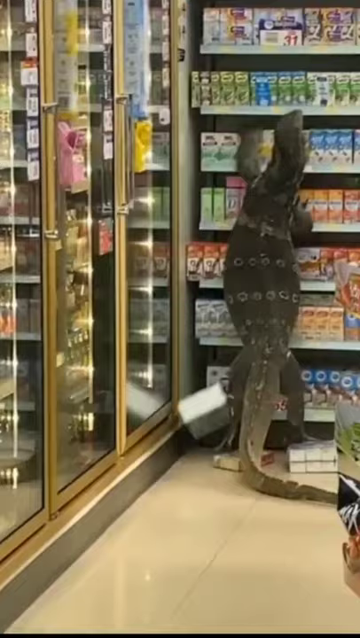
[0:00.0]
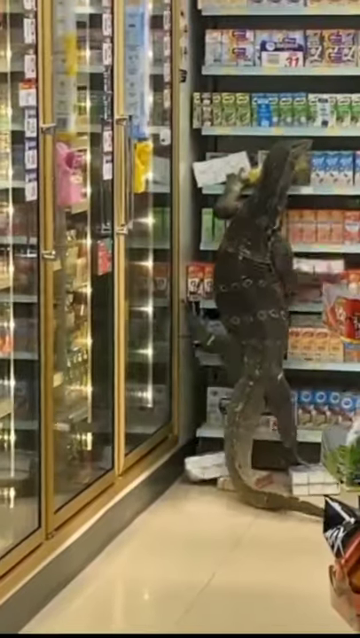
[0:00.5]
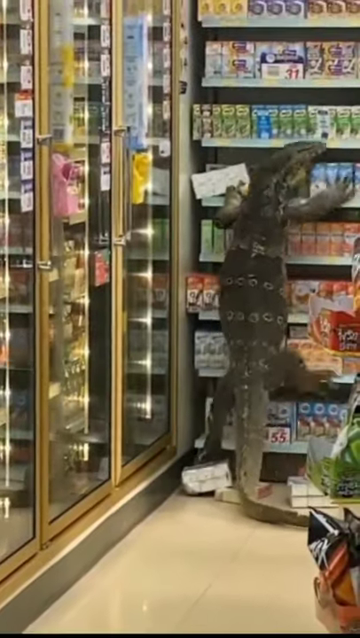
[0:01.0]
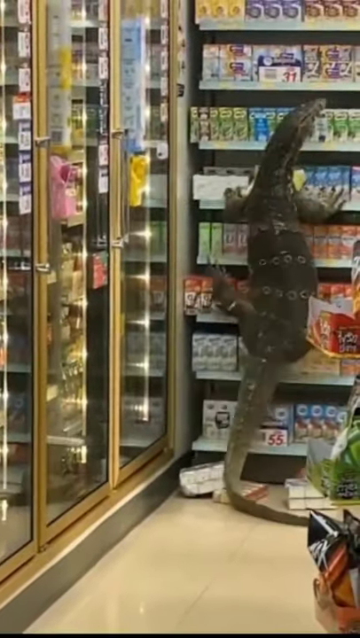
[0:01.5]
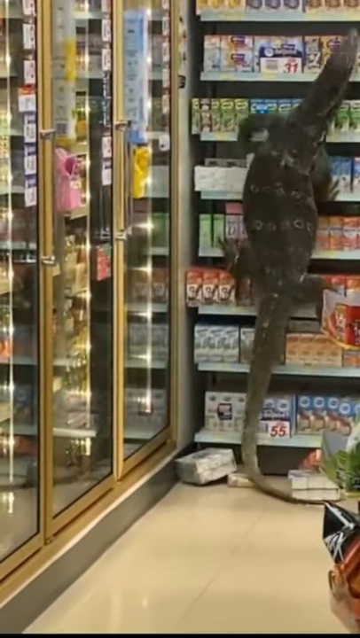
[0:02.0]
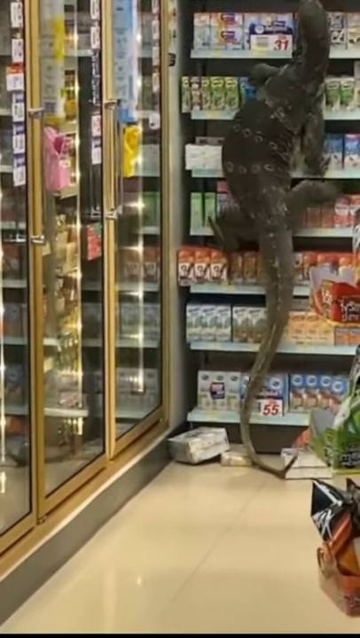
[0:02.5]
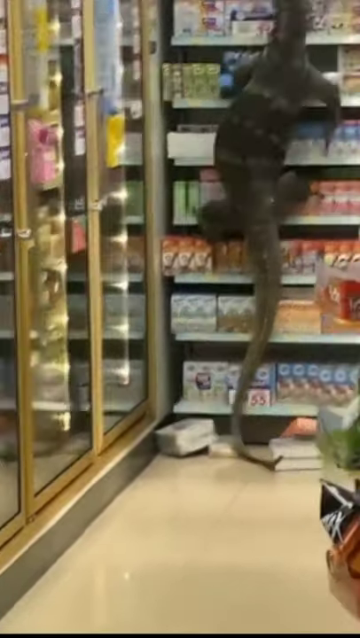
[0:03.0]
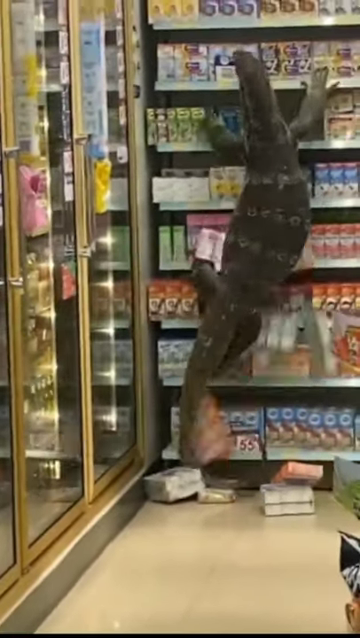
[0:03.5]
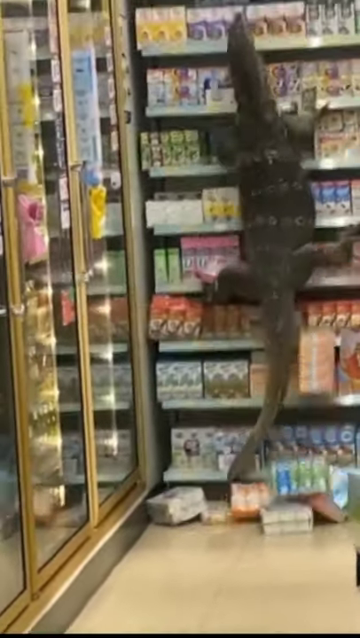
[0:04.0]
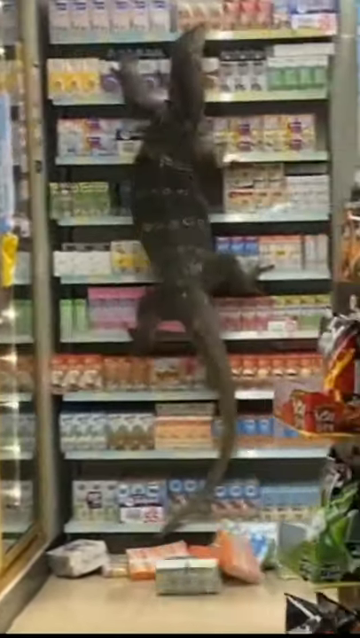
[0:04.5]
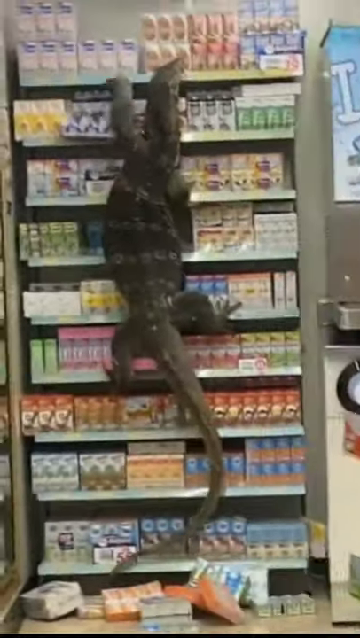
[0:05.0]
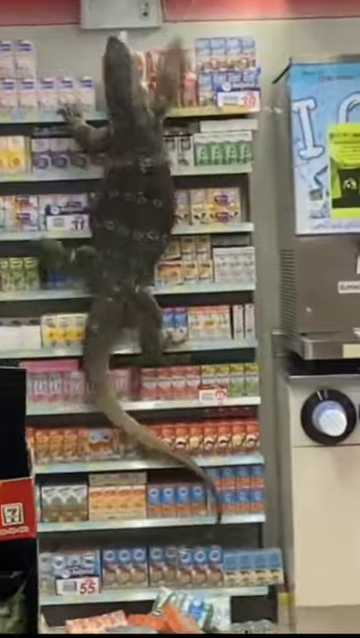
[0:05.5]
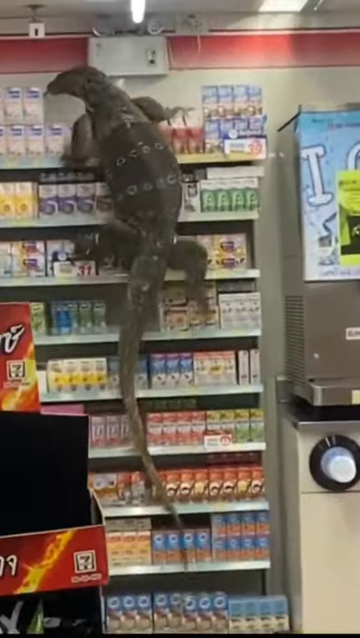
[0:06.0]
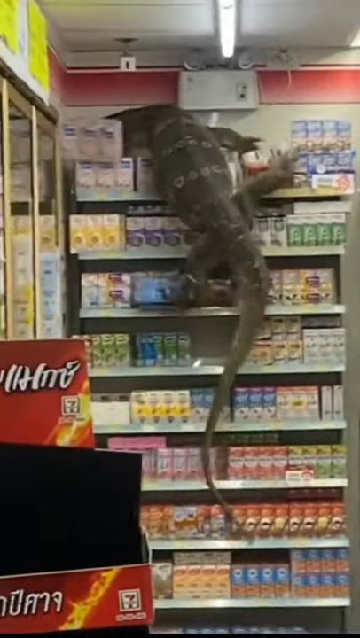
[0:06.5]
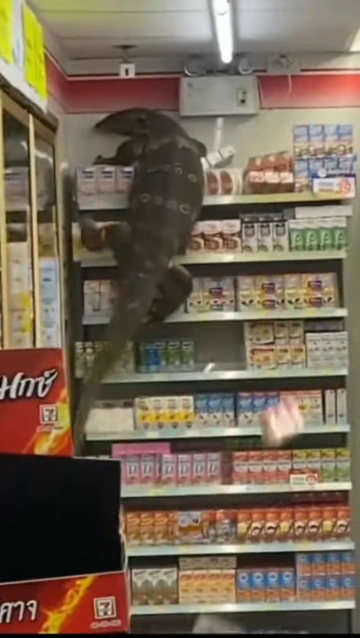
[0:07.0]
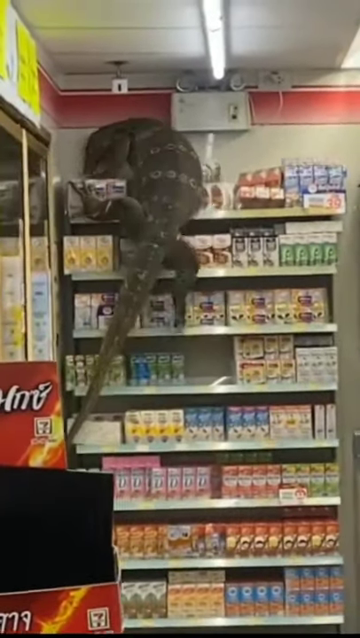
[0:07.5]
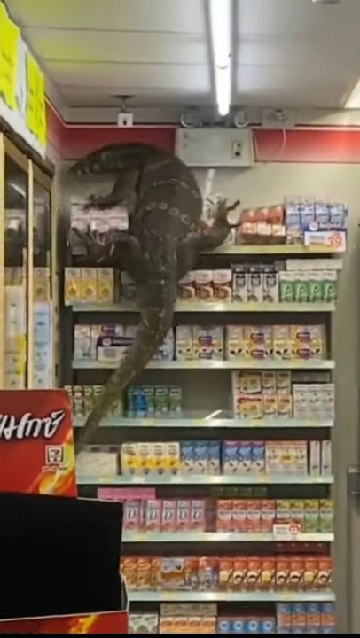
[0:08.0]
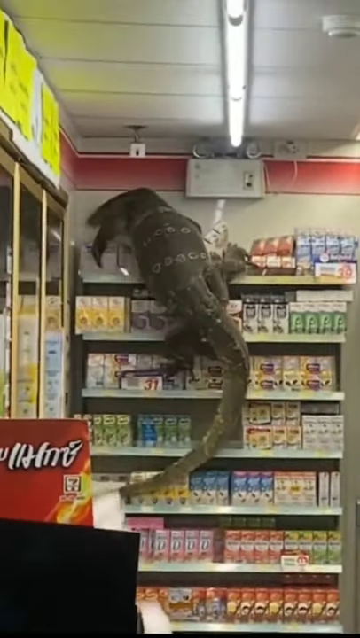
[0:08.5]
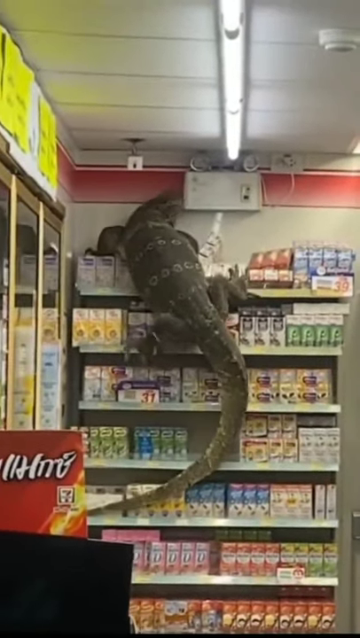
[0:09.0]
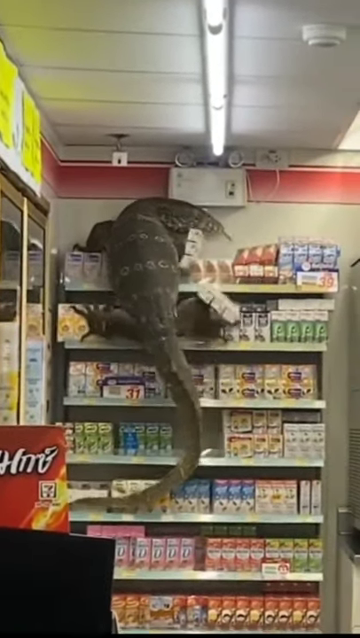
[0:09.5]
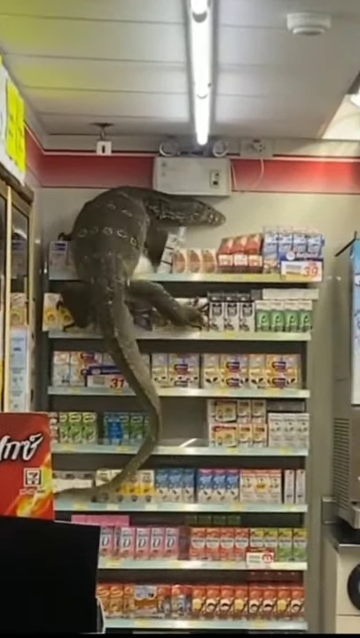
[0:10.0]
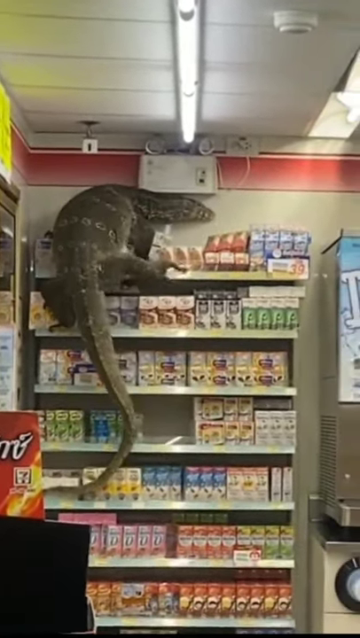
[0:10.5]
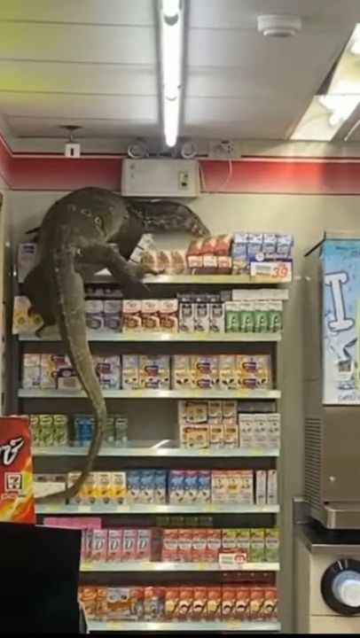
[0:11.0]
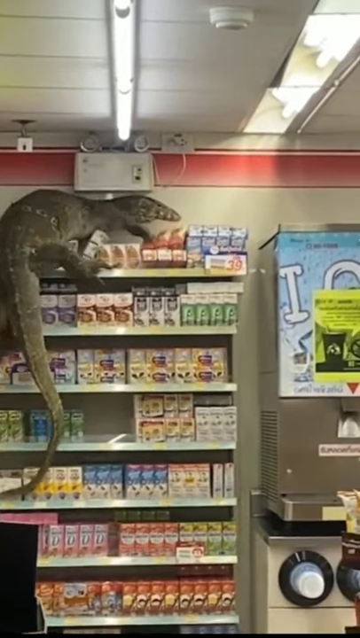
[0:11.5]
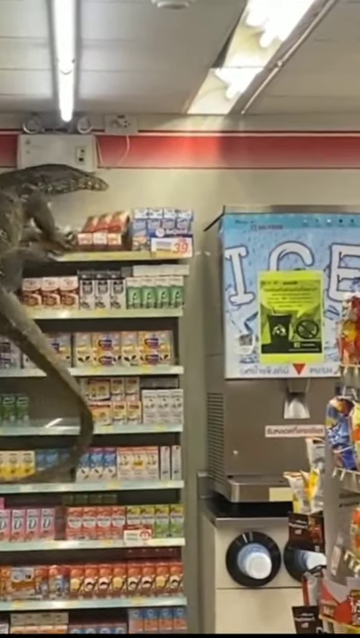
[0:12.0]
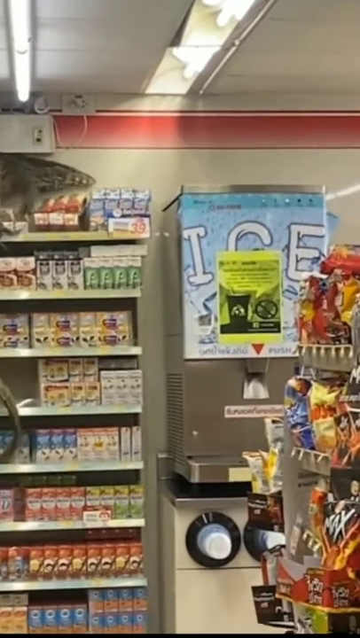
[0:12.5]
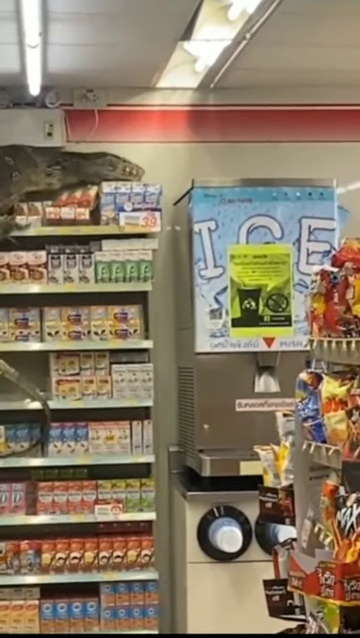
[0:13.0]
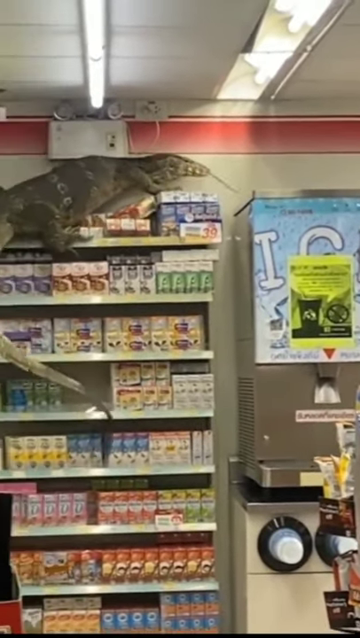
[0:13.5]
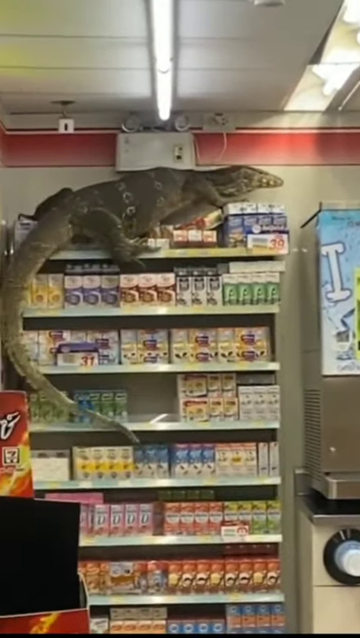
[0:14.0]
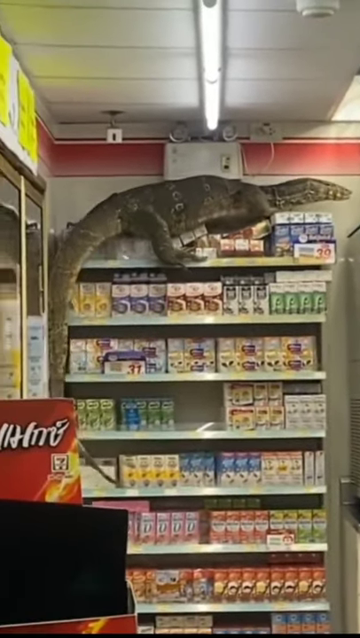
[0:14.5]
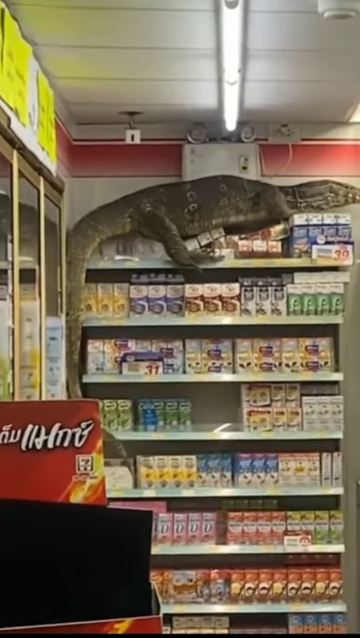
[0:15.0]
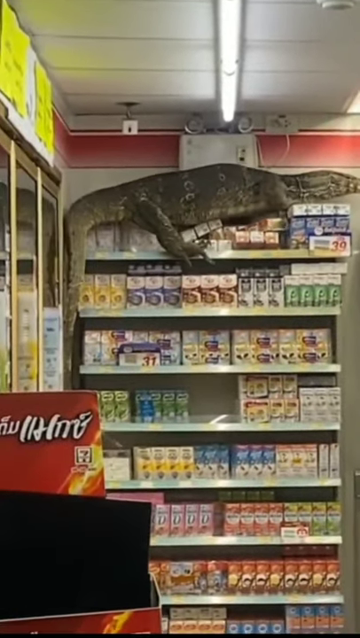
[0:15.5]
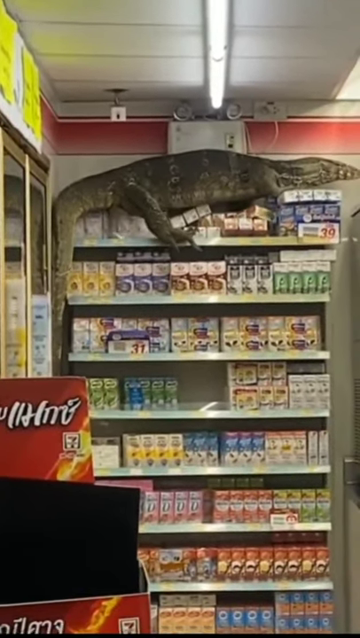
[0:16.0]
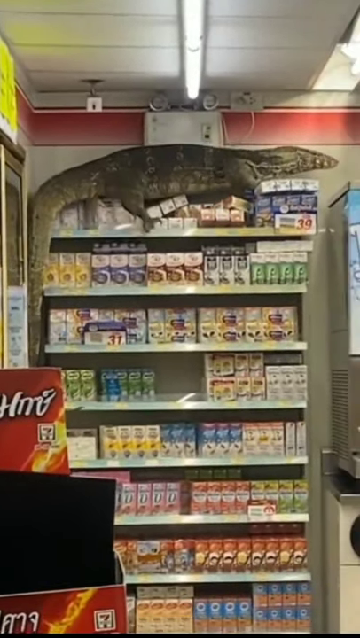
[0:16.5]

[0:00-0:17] In a grocery store, a gray alligator with a very long tail and a very long nose climbs vertically up the grocery shelves. Many boxes fall off the shelving as he continues to climb. He gets himself up to the top, where he kind of levels off into a roughly horizontal stance and pauses. Around him are casings; to the left of the alligator there are apparently cold beverages. He keeps climbing even though he is knocking over lots of boxes.